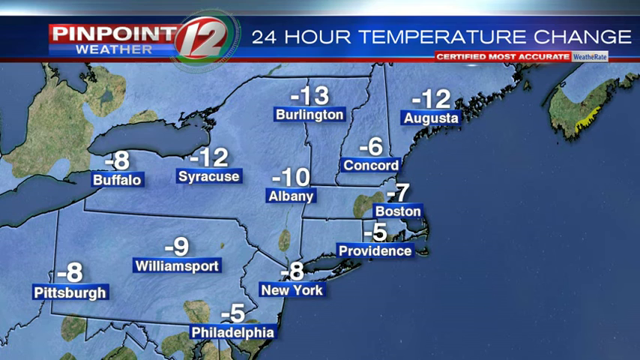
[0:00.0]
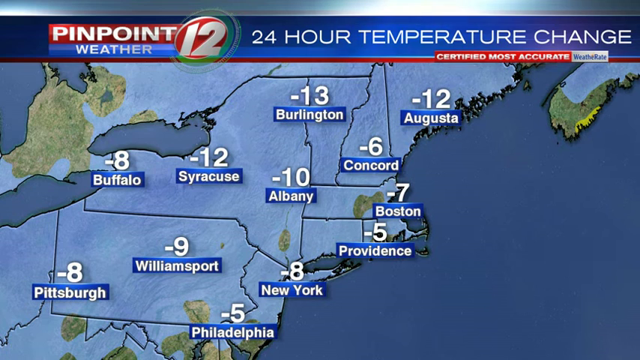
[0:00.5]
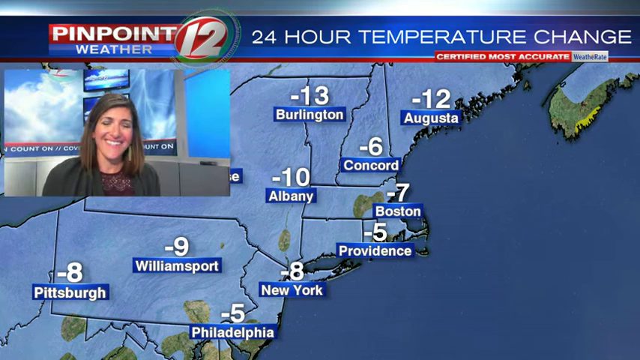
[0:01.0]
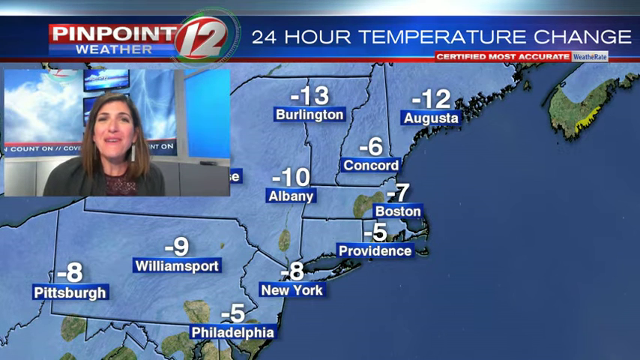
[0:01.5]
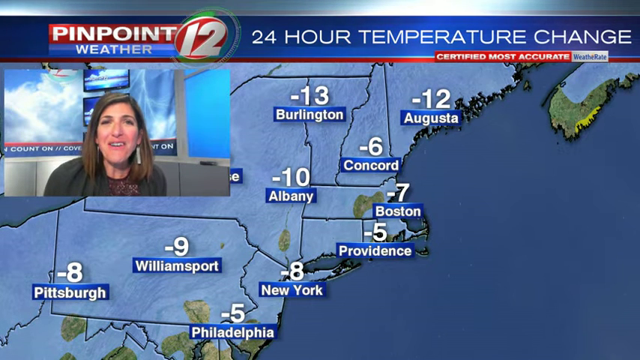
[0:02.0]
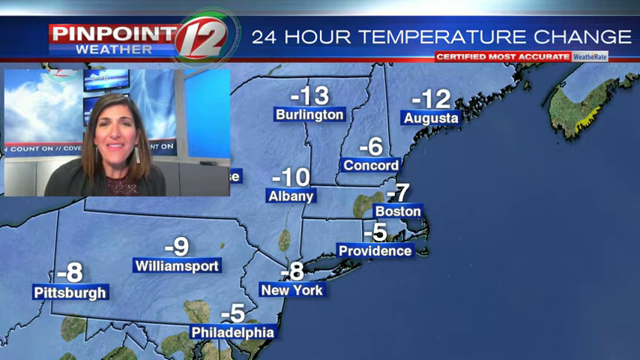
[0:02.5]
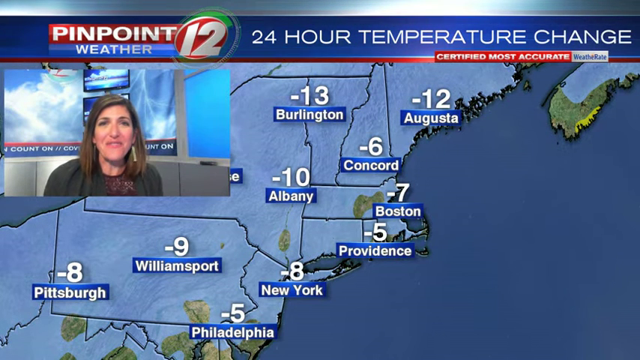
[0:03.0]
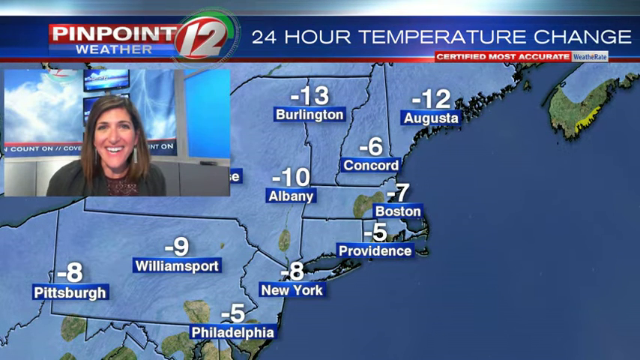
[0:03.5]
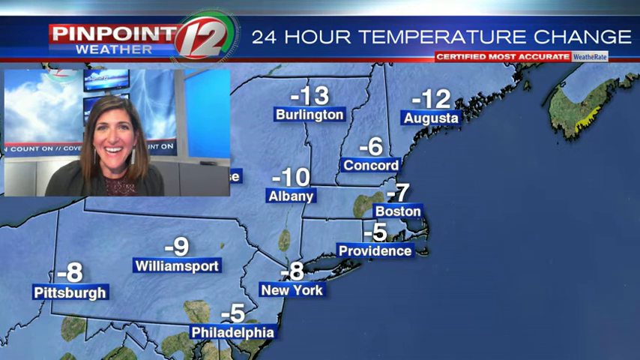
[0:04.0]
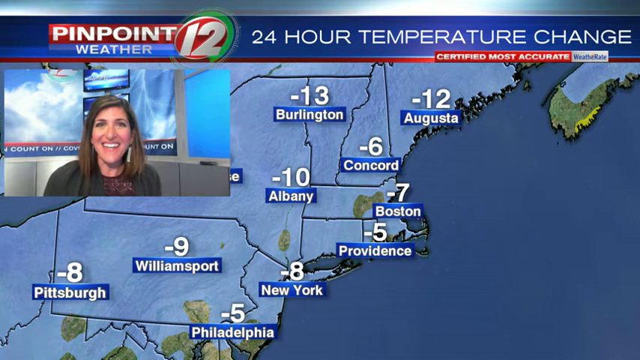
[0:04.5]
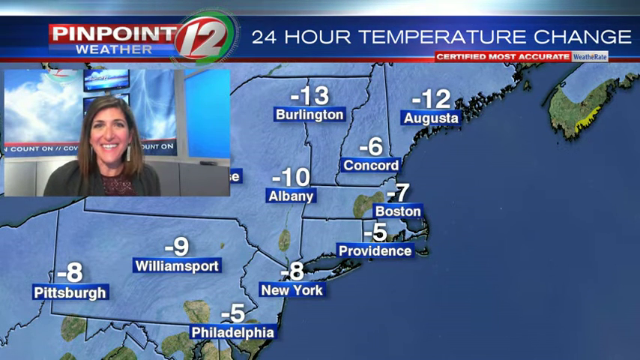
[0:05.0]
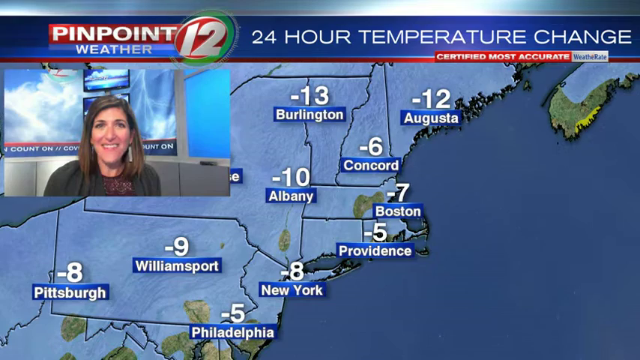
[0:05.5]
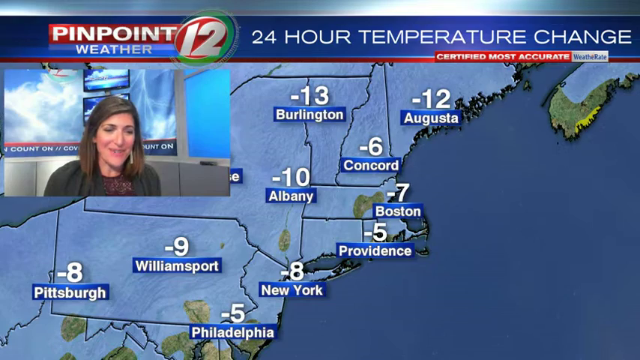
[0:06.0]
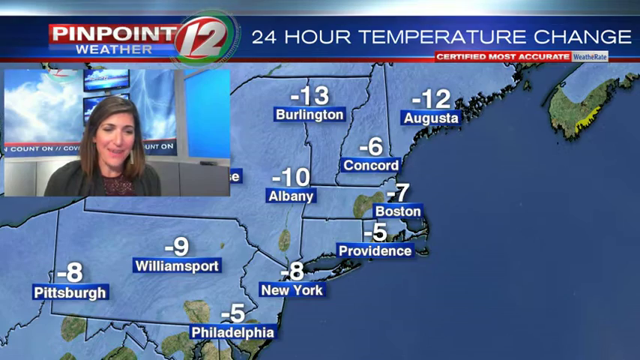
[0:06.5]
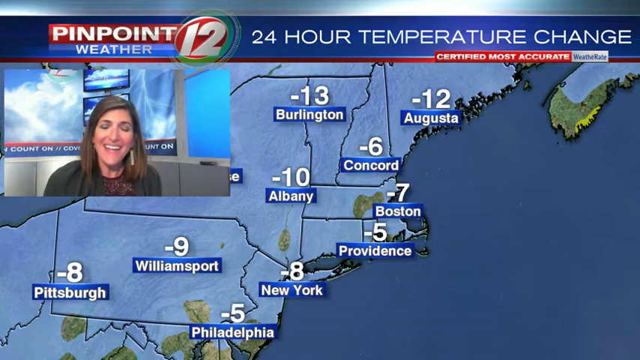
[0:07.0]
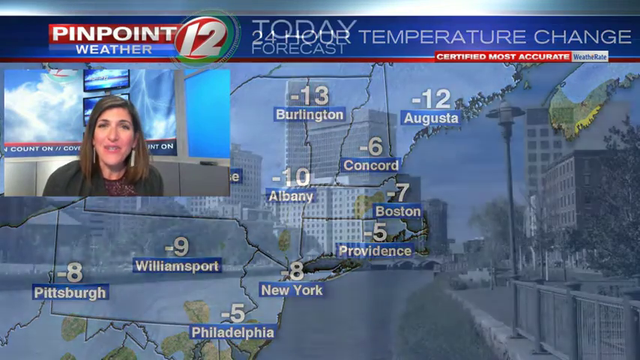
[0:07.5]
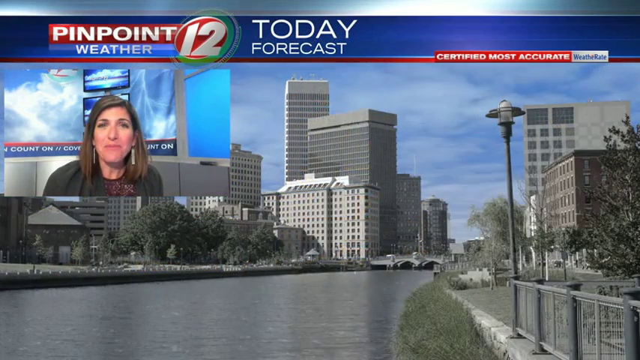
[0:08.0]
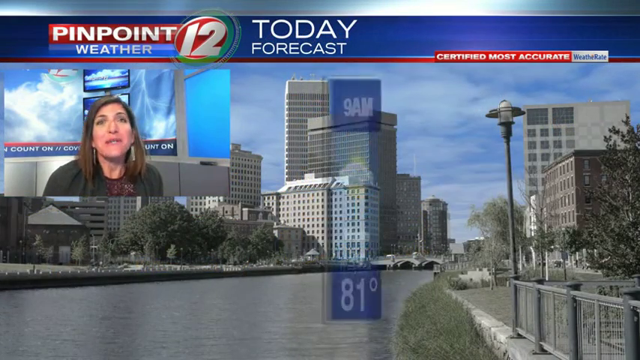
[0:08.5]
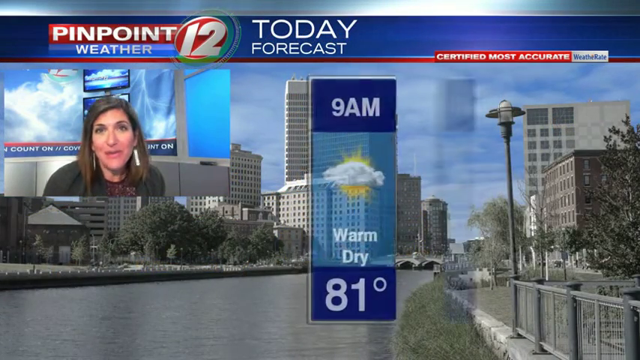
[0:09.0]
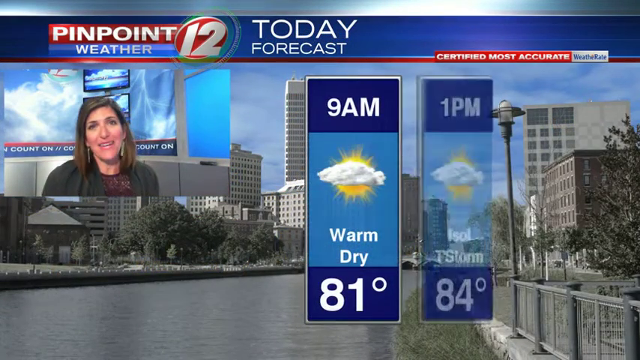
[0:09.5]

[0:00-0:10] The Pinpoint 12 weather forecast begins with a weather chart, with "Pinpoint 12 weather" in the top left. The text "24-hour temperature change" and "certified most accurate" appears, followed by a map of places with values: Buffalo negative 8, Burlington negative 13, Augusta negative 12, Concord negative 6, Boston negative 7, Providence negative 5, New York negative 8, Albany negative 10, Williamsport negative 9, Pittsburgh negative 8 and Philadelphia negative 5. A frame then appears in the top left showing a lady in a newsroom, apparently a meteorologist, who is speaking.